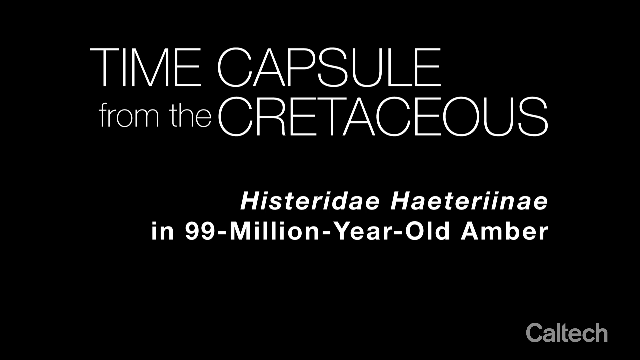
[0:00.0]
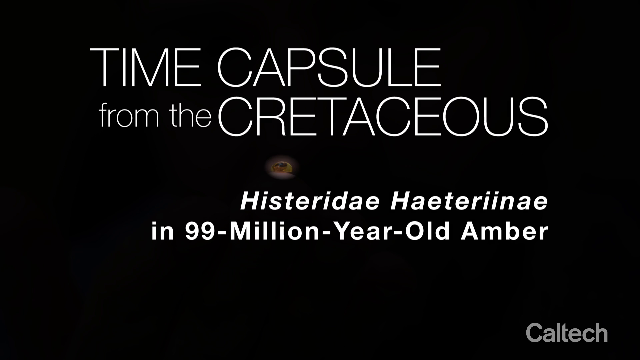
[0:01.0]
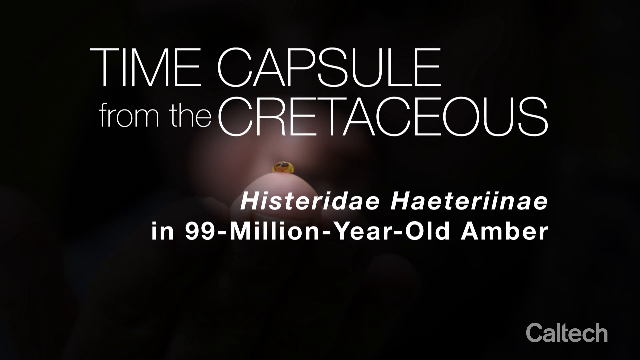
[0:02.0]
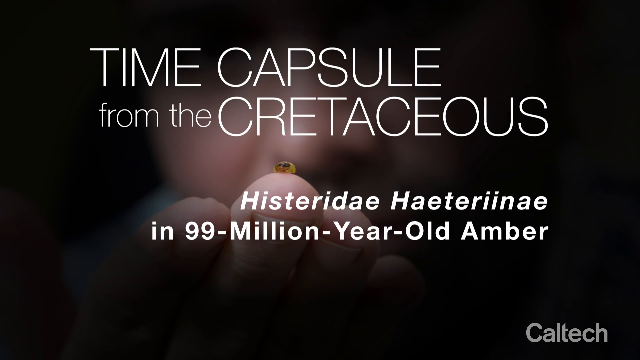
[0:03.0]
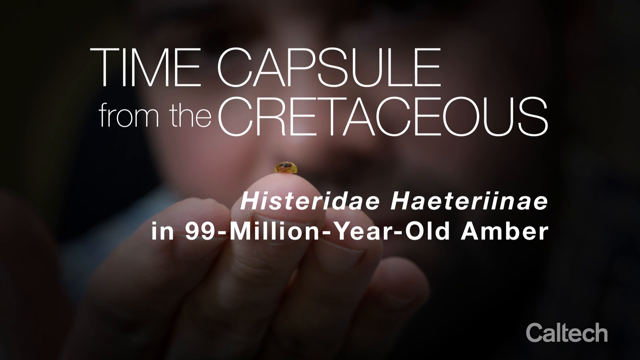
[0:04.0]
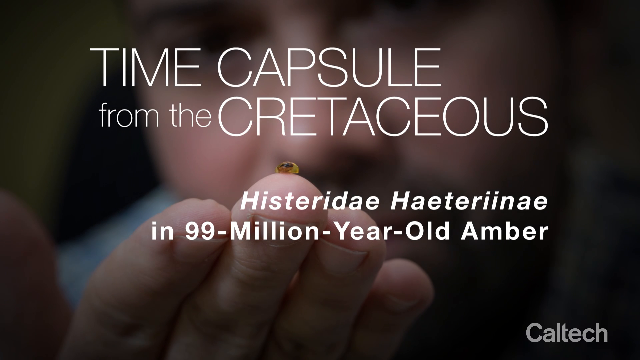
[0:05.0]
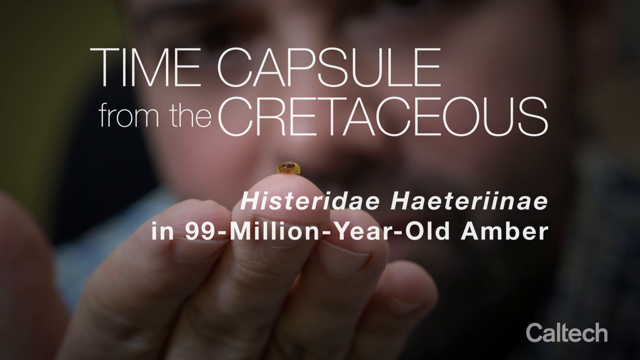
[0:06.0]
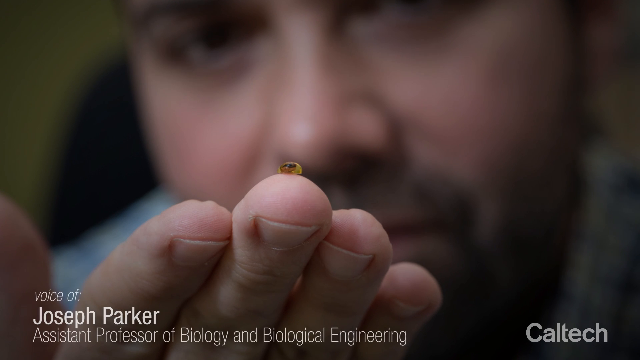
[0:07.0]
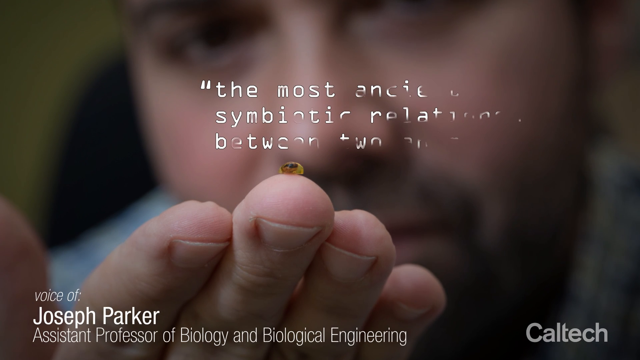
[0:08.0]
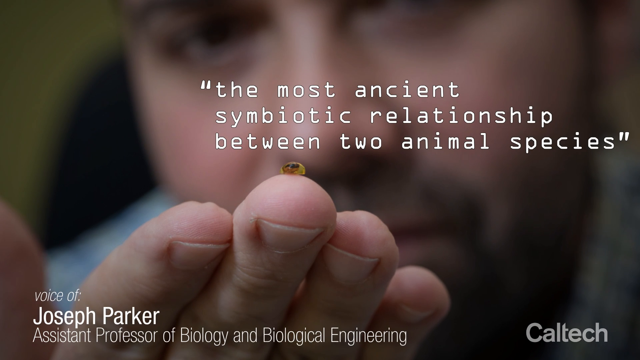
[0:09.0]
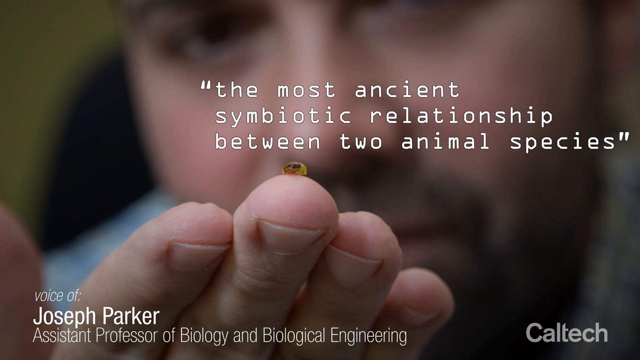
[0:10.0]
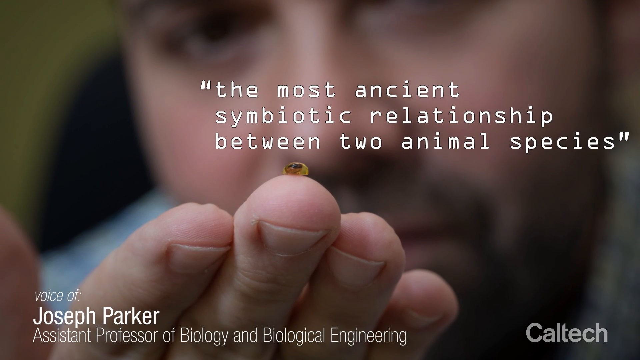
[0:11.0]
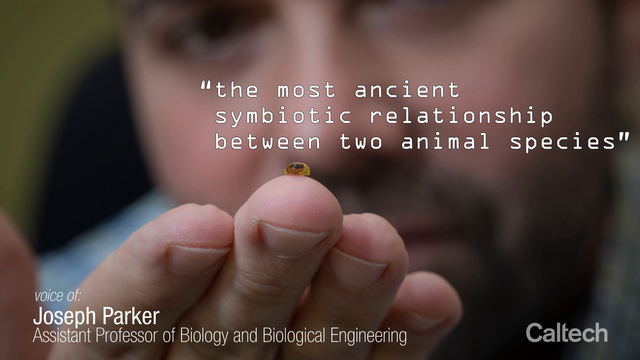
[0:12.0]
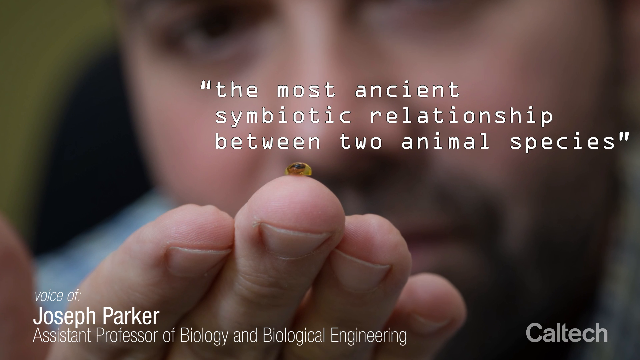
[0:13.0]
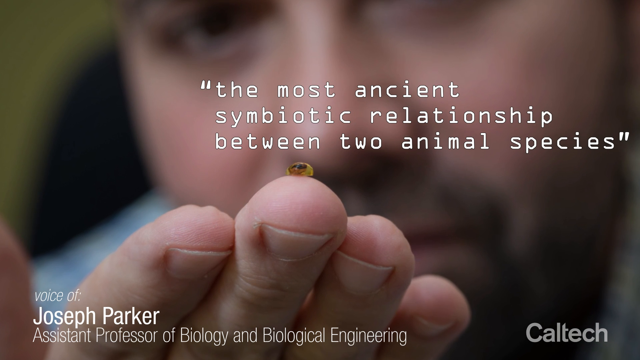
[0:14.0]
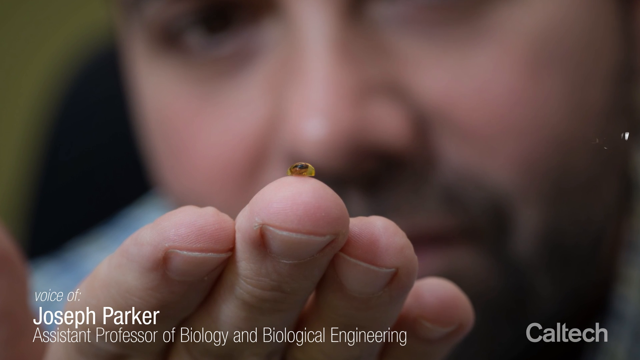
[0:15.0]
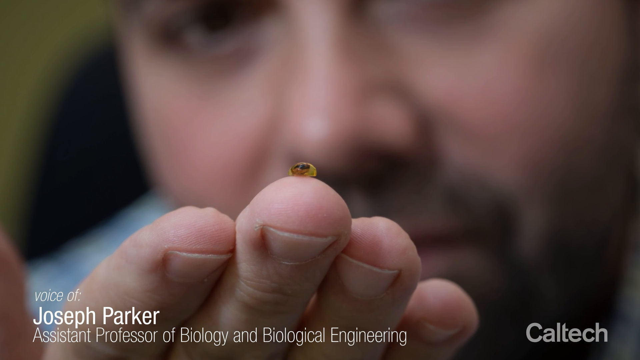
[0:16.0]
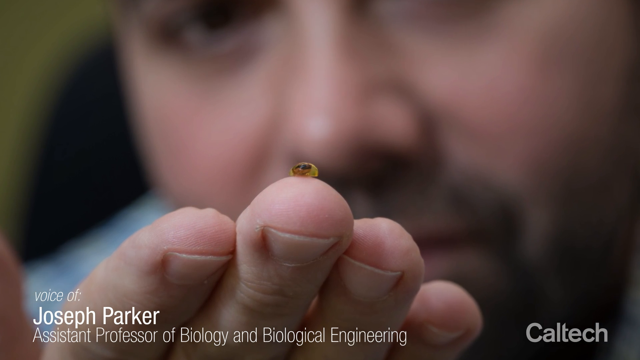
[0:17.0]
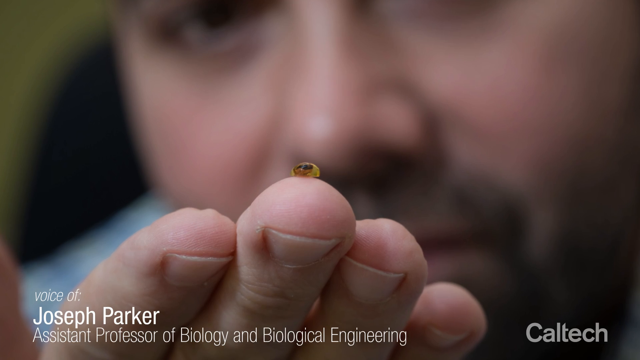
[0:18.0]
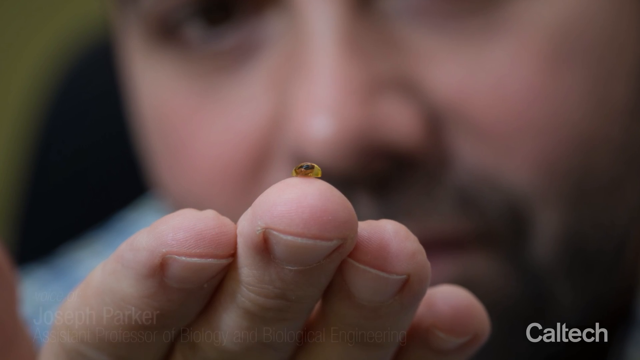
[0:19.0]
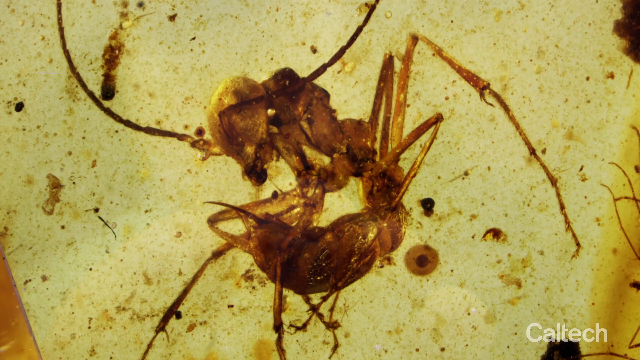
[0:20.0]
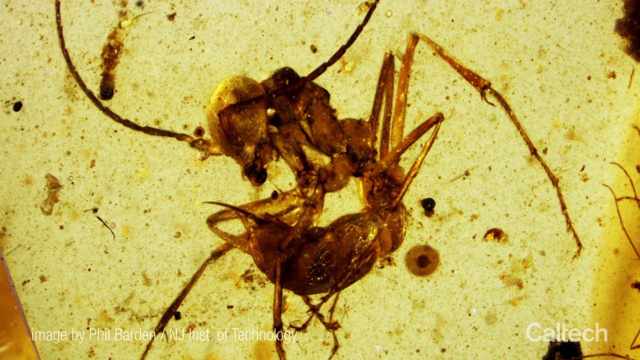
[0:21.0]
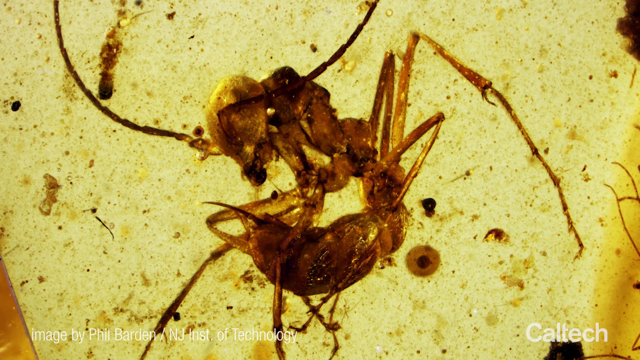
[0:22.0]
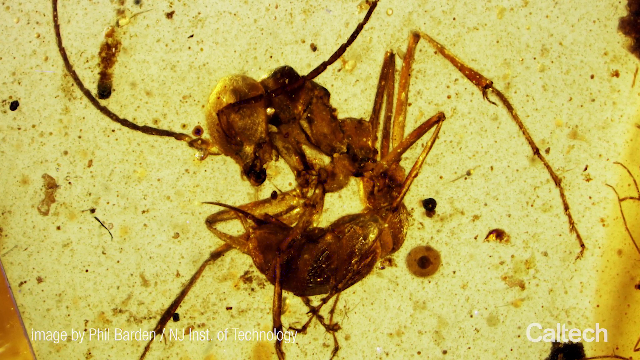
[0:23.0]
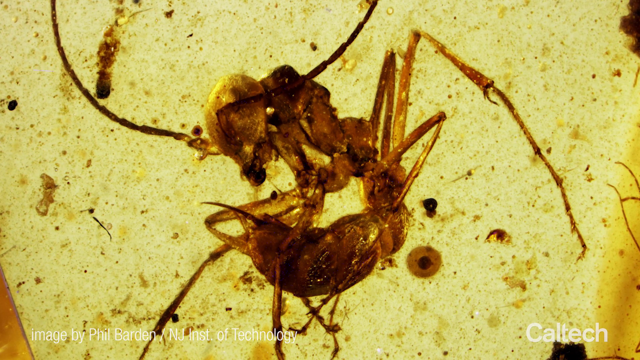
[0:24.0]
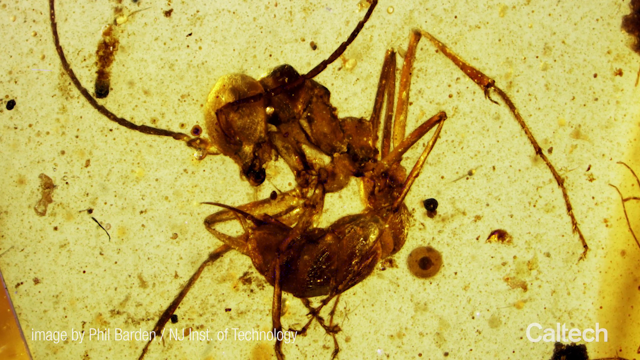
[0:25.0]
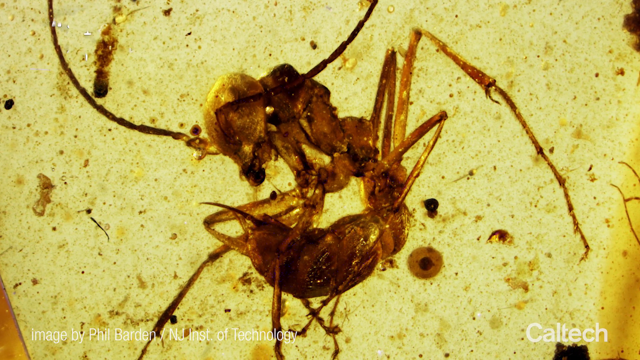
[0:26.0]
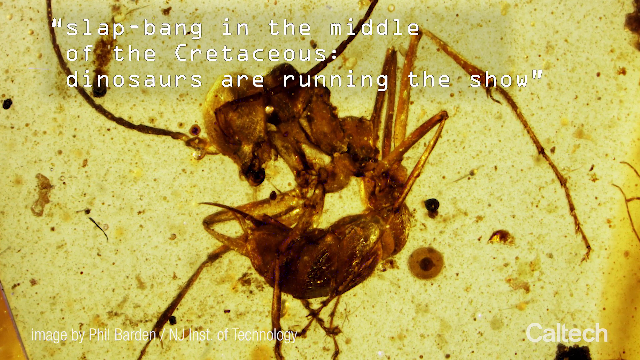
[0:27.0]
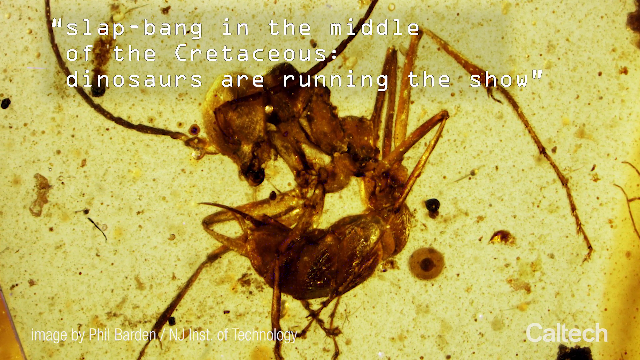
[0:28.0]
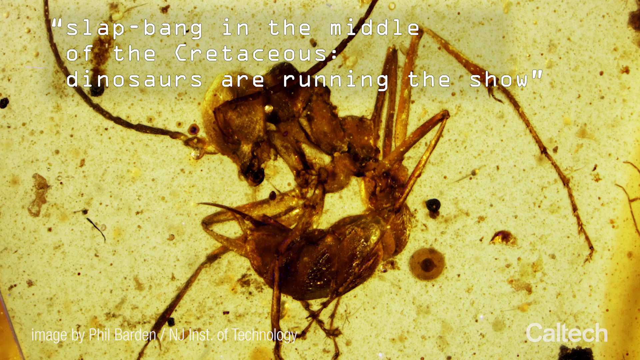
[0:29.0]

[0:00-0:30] The video opens with a title in a white sans-serif font on a black background that reads "Time Capsule from the Cretaceous." A Latin name is then given for a creature that was found in amber and had been preserved for 99 million years; the name is spelled histeridae haeteriinae. The scene fades to the creature, which is barely the size of a pea and is encased in amber. A still picture of the preserved creature follows, with a call-out quote attributed to Joseph Parker in a white font: "The most ancient symbiotic relationship between two animal species." The text disappears and the view goes close up into the amber, revealing that the creature is actually two creatures, a kind of scorpion-looking insect with a large antenna, embracing each other encased in the amber.